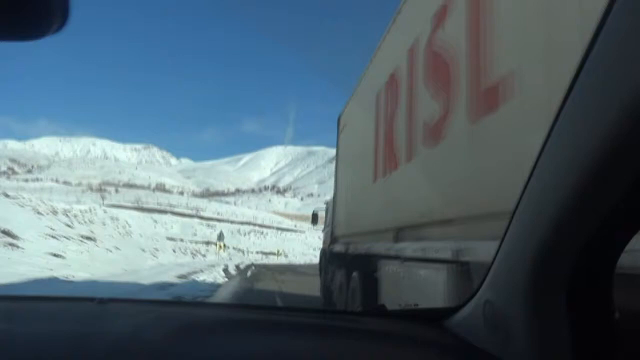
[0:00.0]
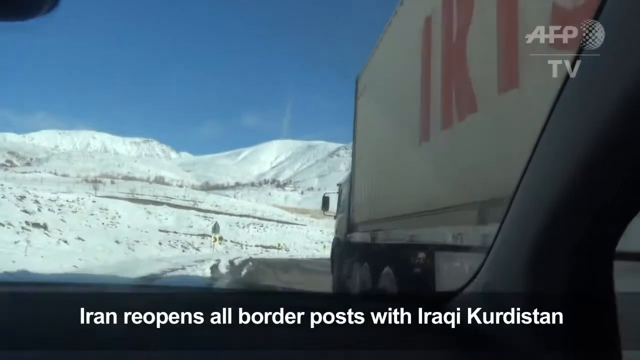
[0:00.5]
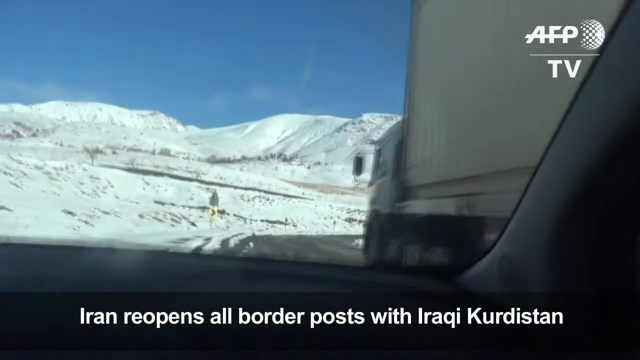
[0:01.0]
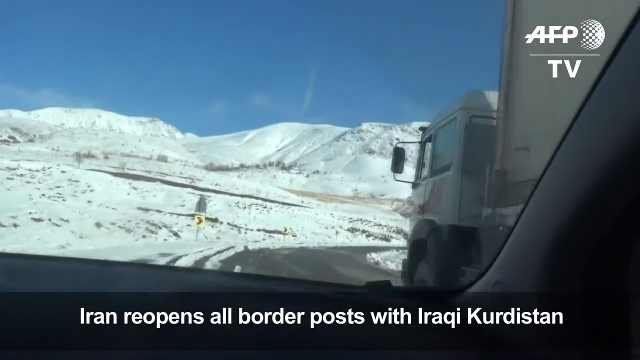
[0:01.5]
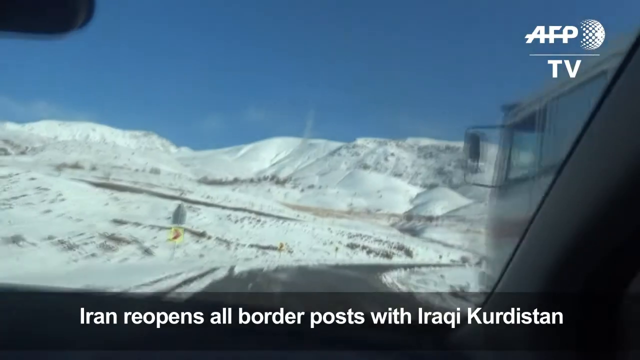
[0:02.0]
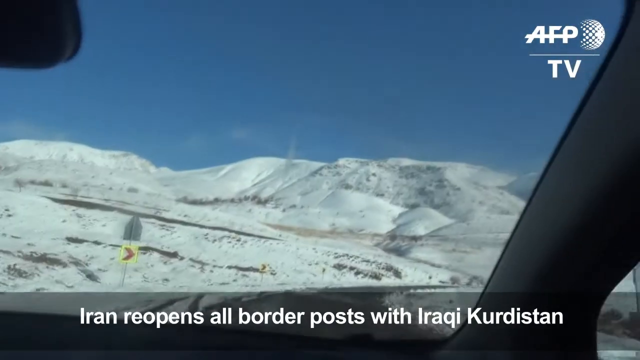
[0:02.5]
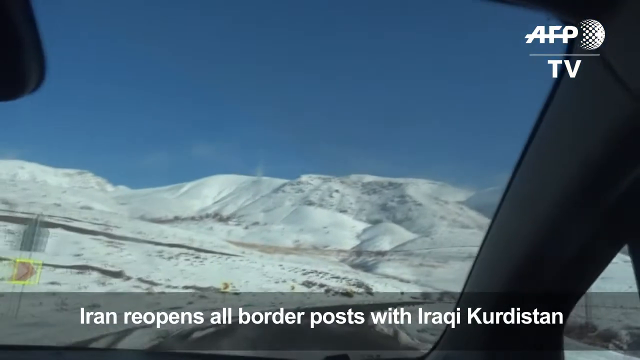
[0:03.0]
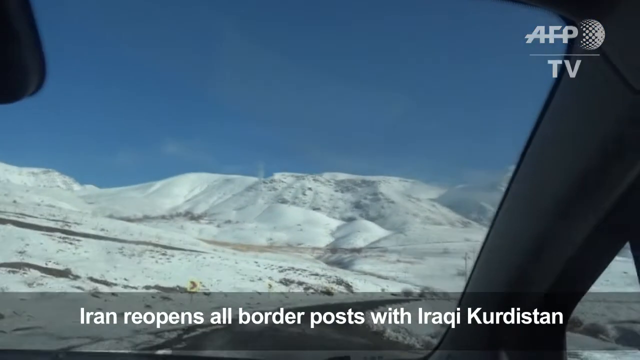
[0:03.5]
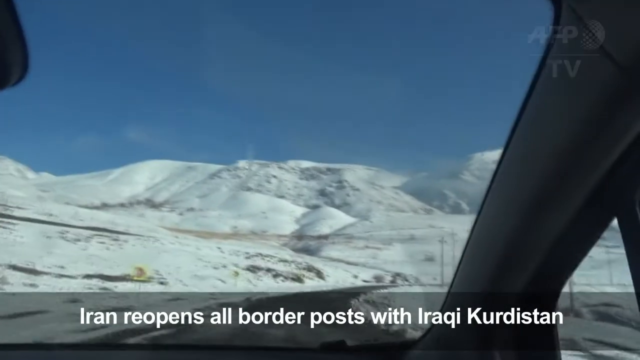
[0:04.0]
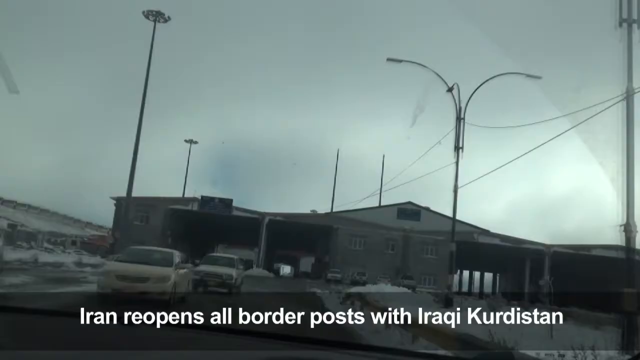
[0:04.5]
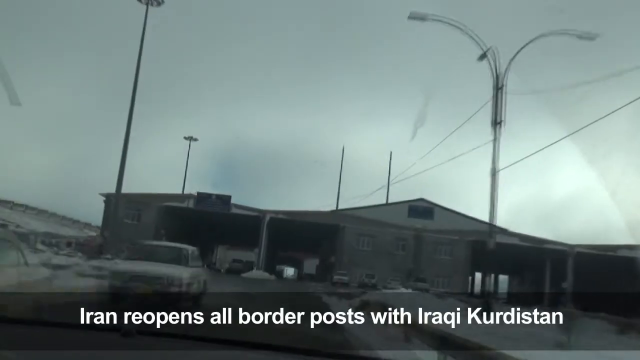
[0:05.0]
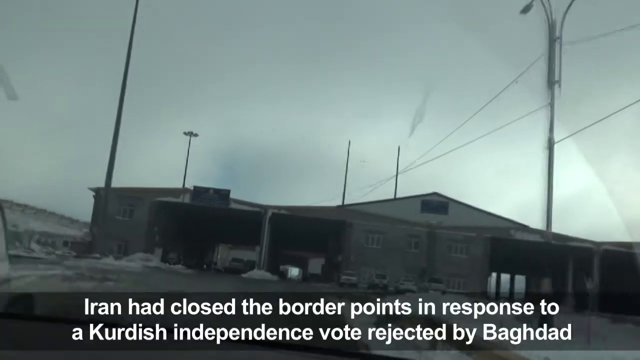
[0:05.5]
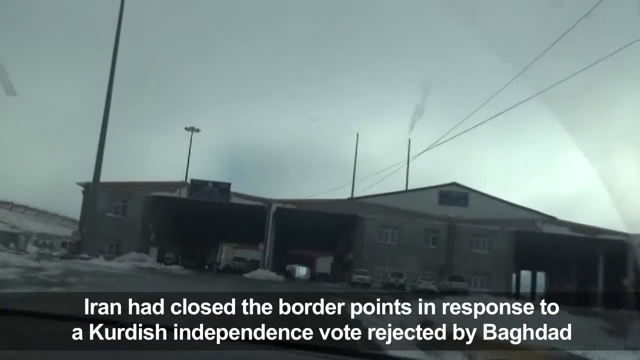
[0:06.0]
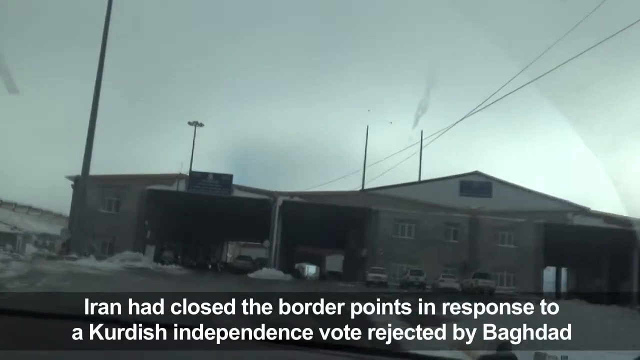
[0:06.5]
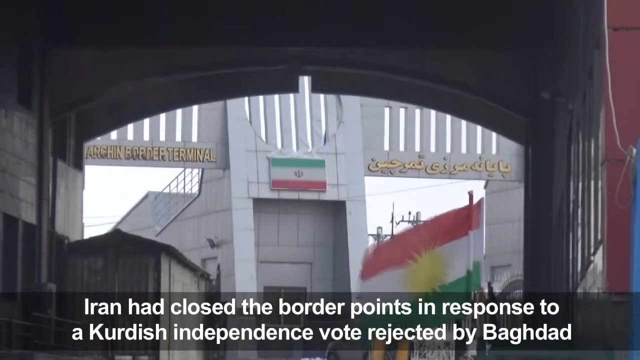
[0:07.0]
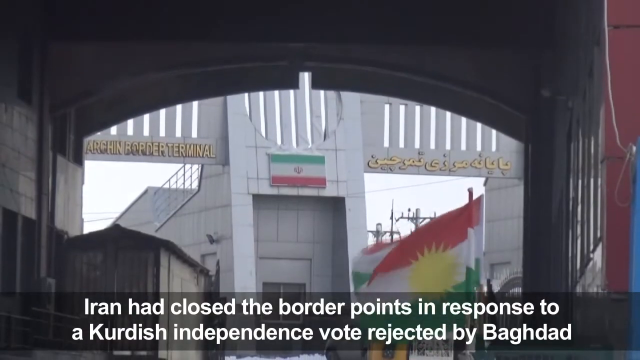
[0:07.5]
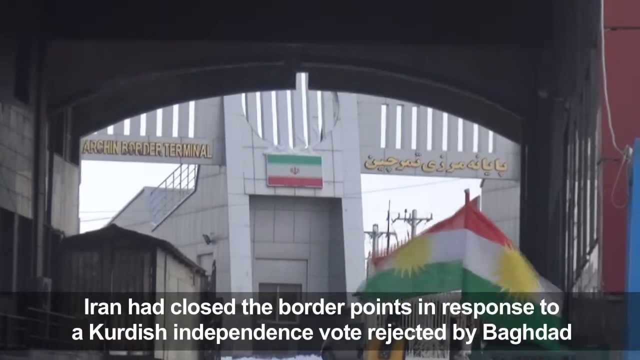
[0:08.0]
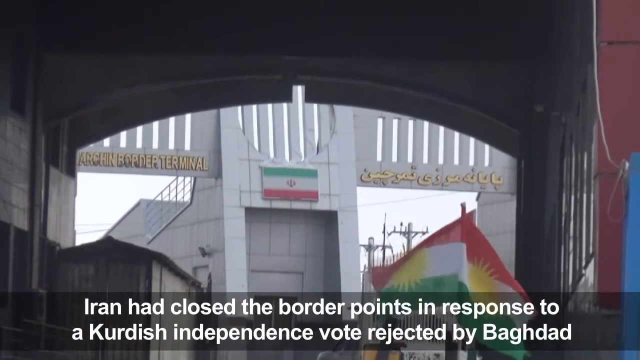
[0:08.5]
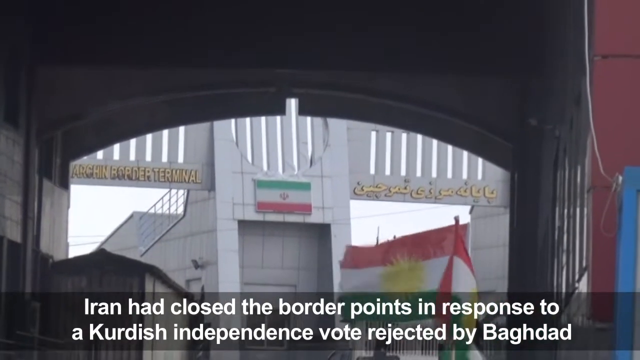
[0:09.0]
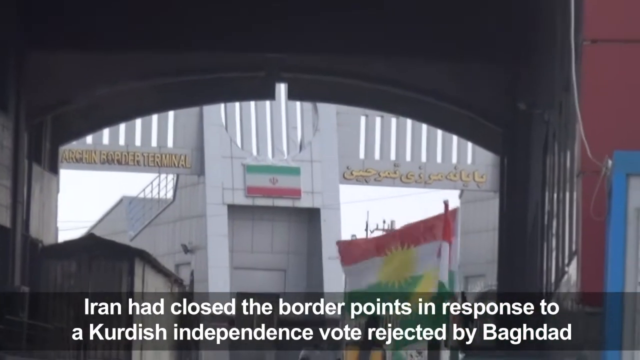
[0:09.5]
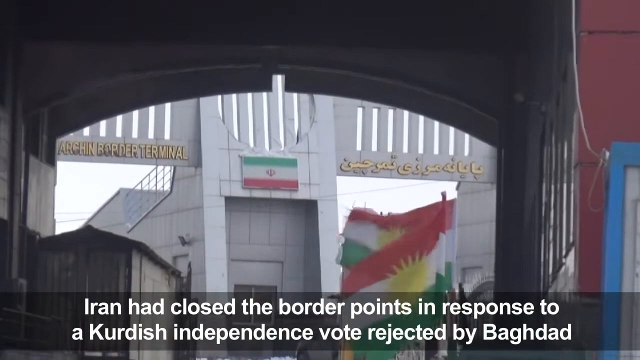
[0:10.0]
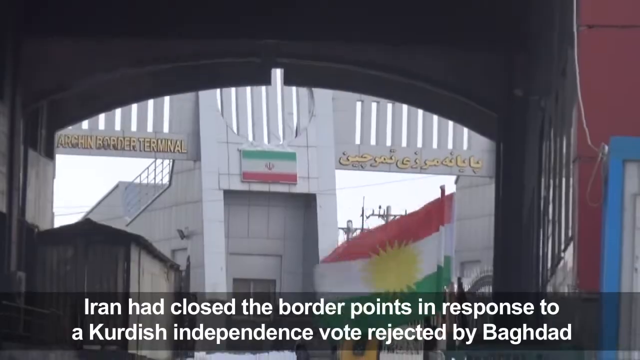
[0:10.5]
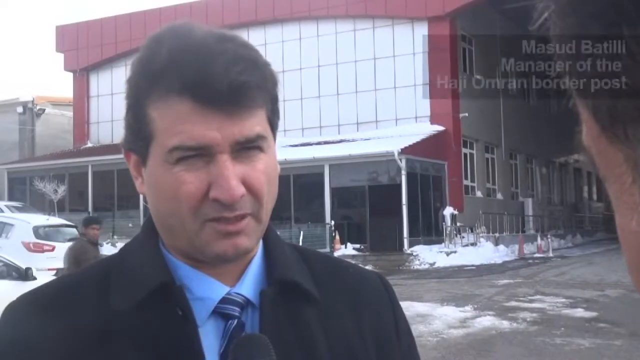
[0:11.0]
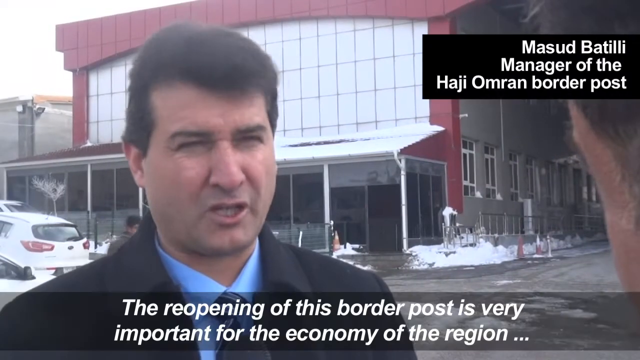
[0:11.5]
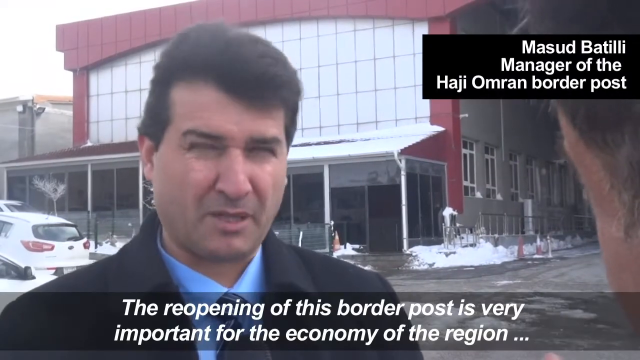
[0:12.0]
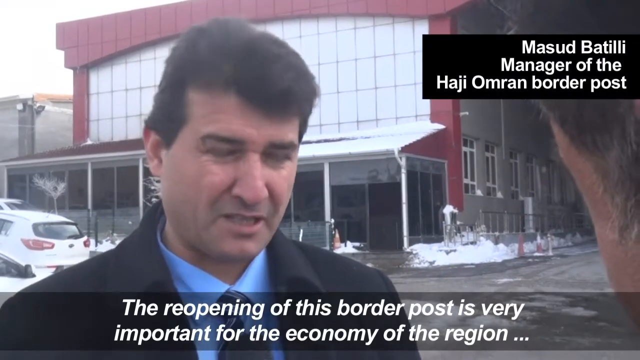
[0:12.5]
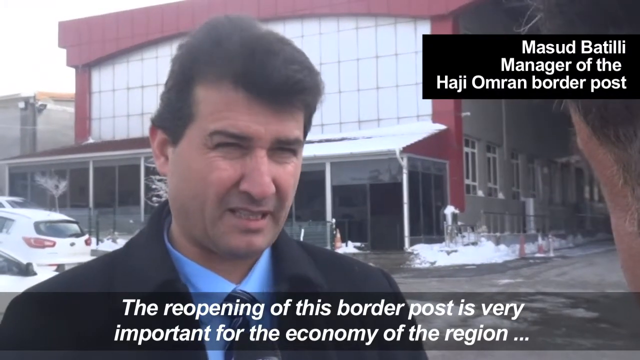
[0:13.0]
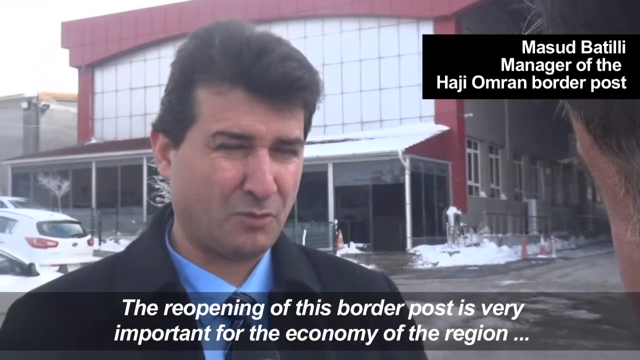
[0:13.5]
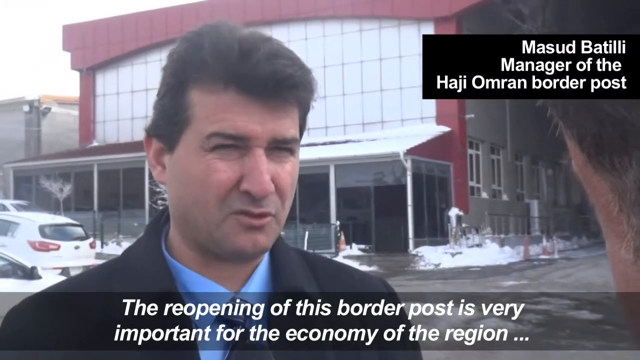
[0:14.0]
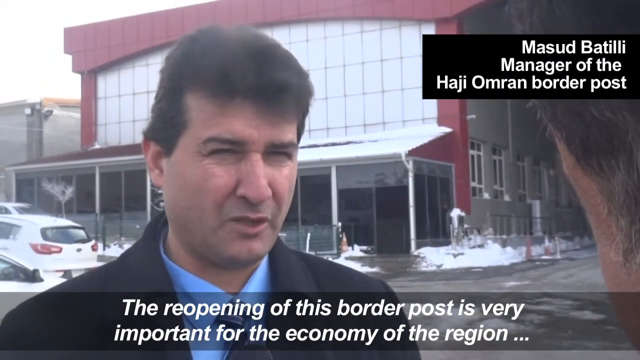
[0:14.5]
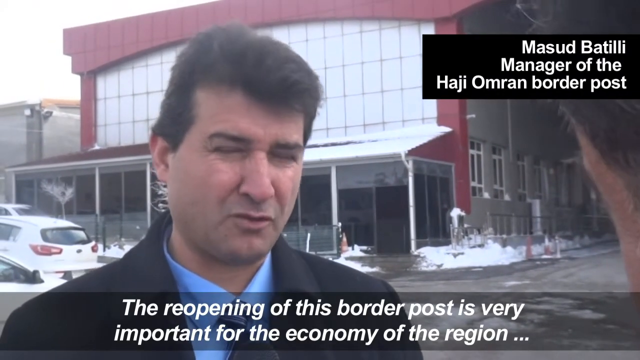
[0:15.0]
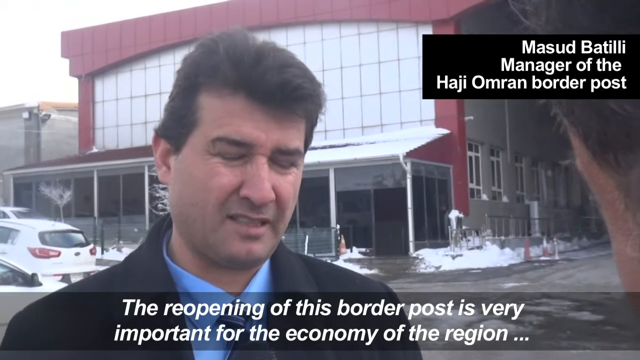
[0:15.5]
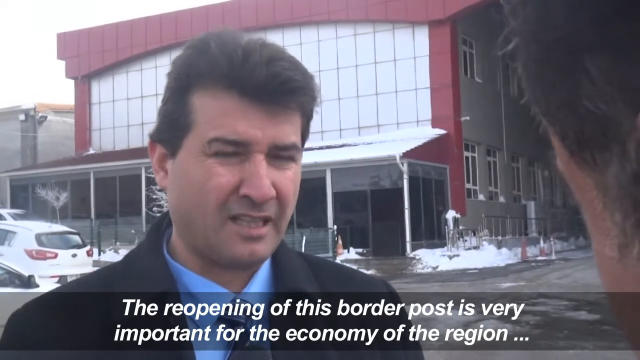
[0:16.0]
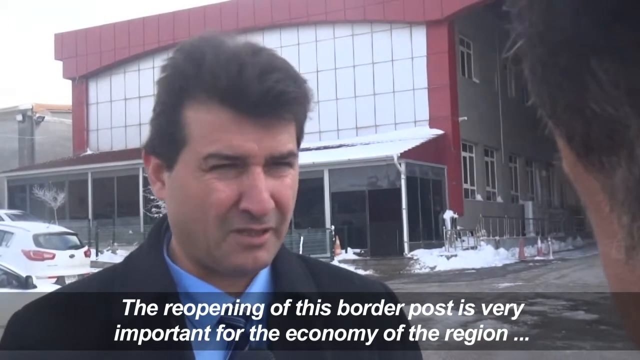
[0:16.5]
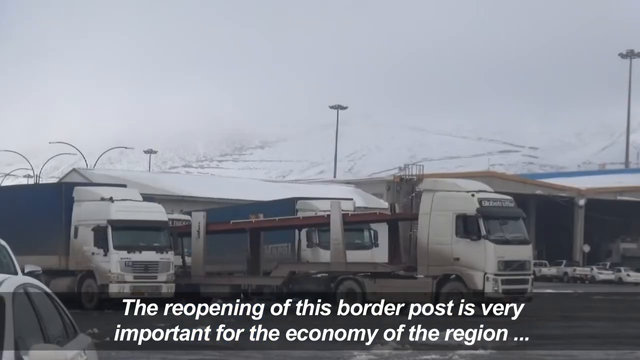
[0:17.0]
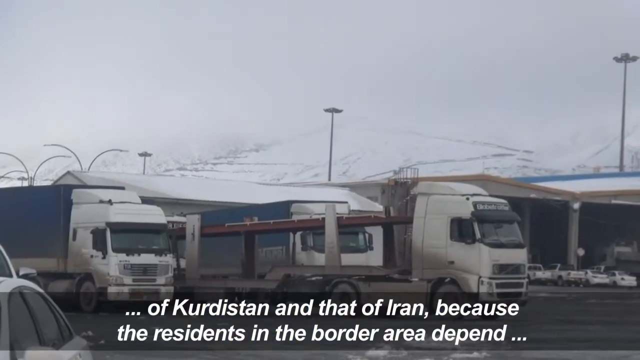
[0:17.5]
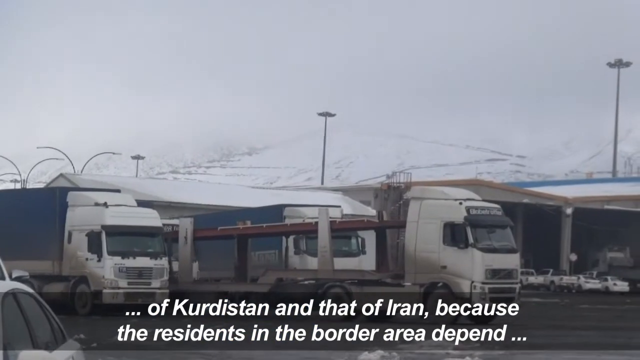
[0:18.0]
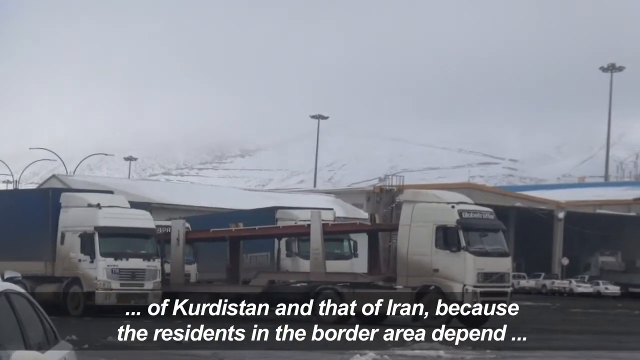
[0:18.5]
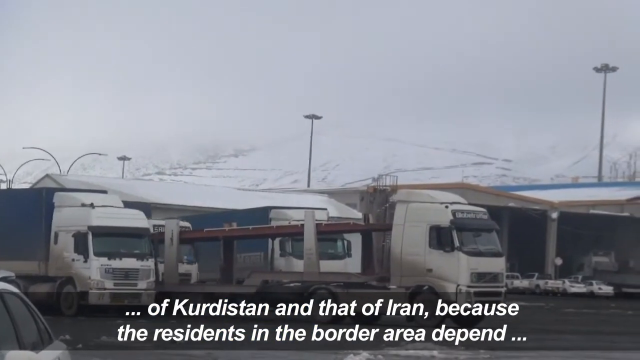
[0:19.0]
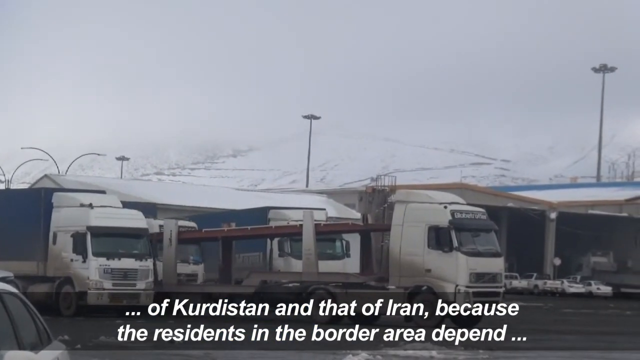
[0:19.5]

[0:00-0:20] This appears to be a news story about the border reopening between Iran and the Kurdish section of Iraq. Footage from inside a vehicle shows it driving along a winding mountain road, with lots of snow on the hills and mountain tops visible out of the window. The sky is a bright blue. Text along the lower third of the screen states that Iran has reopened its borders with Kurdish Iraq, and that Iran had closed the border points in response to the Kurdish independence vote, which had been rejected by Baghdad. Next, what appears to be the border crossing point between Iran and Iraq comes into view: large concrete structures with gold writing in English and in Farsi or Arabic, and the Iranian and Iraqi flags as the vehicle drives up to it. The scene then changes to a man with black hair, wearing a black jacket, a blue shirt and a blue tie, standing in front of what appears to be a border building and giving his opinion on the reopening of the border and how positive it is for the region's economy. Lorries and trucks are queuing up, waiting to cross the border.